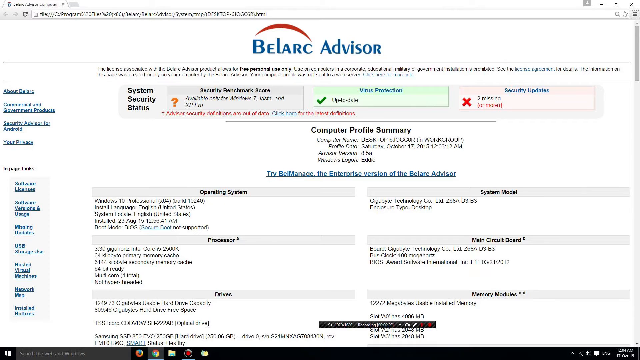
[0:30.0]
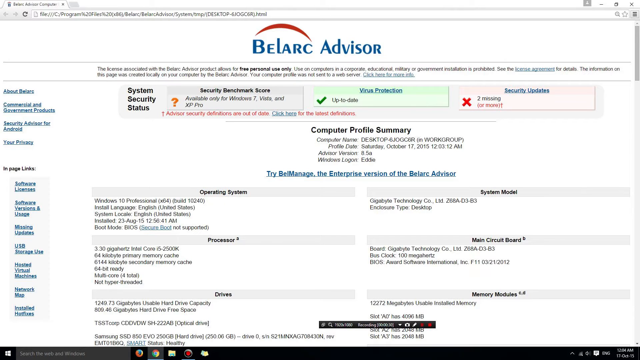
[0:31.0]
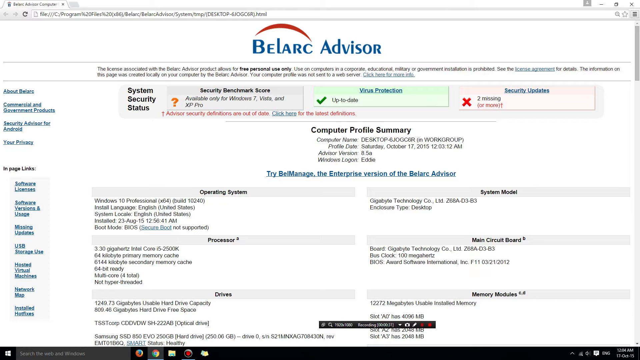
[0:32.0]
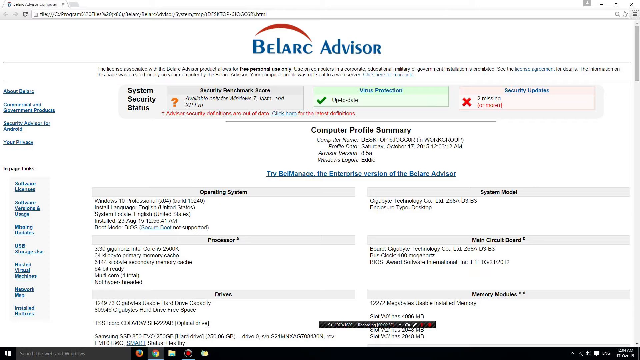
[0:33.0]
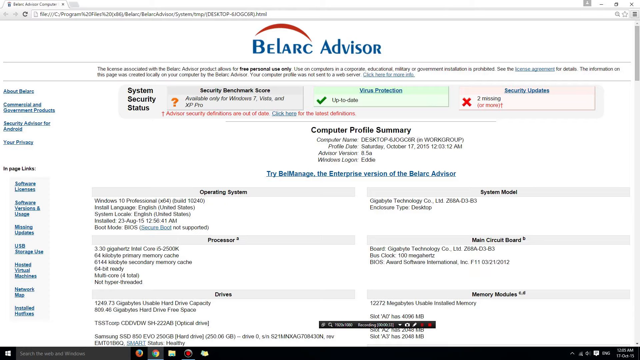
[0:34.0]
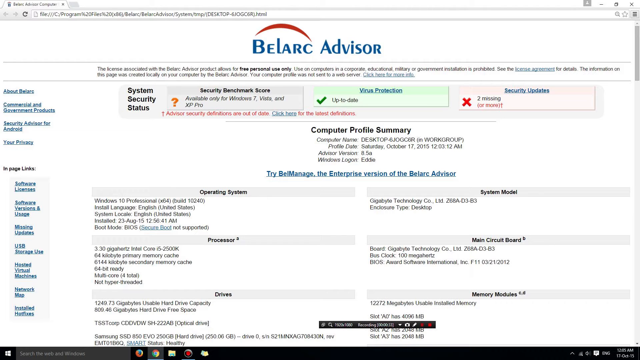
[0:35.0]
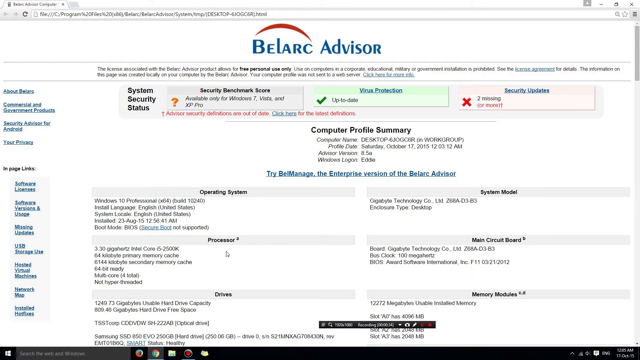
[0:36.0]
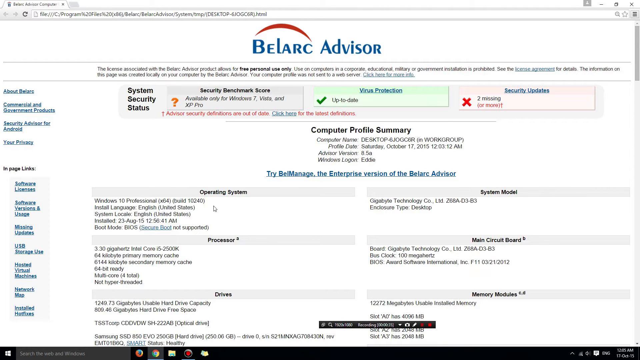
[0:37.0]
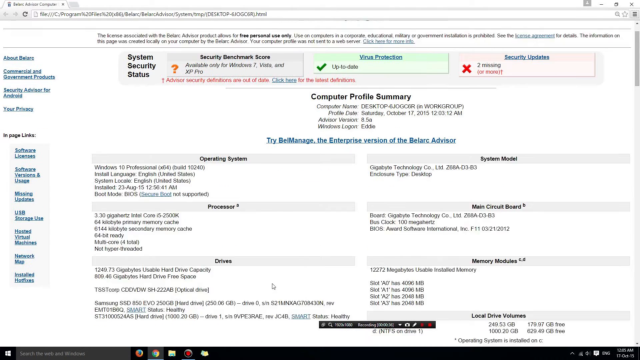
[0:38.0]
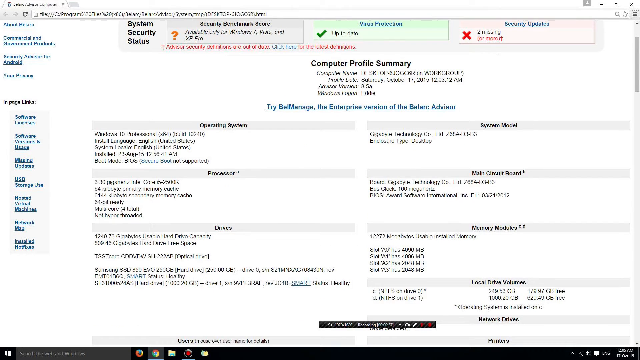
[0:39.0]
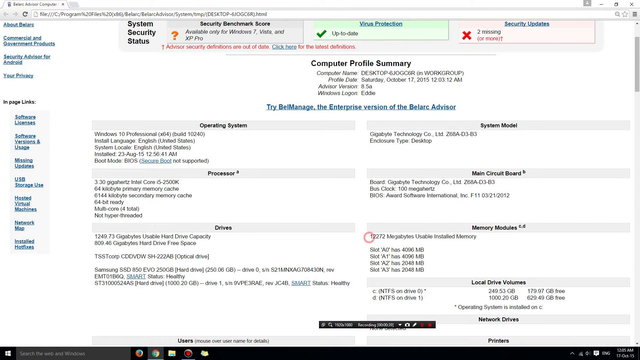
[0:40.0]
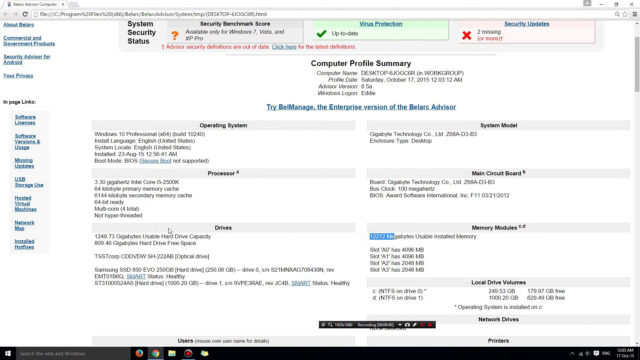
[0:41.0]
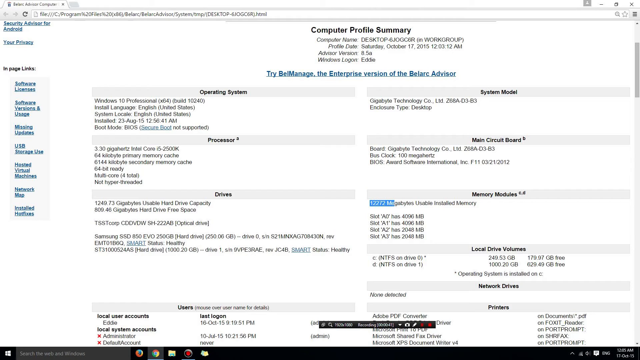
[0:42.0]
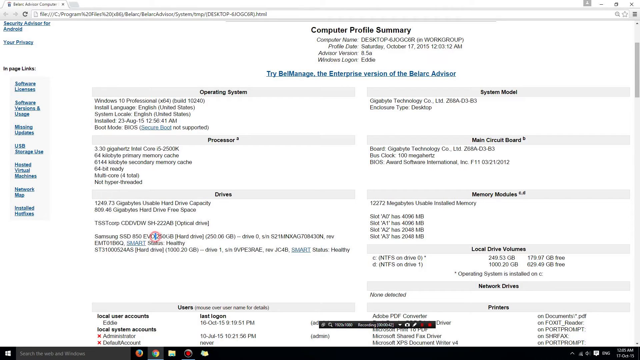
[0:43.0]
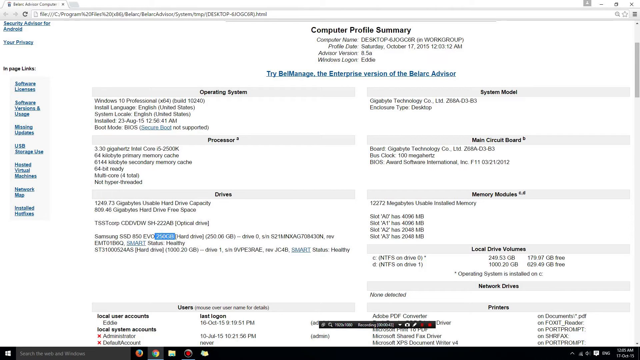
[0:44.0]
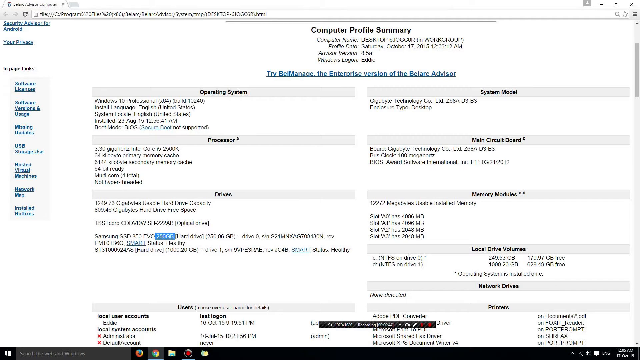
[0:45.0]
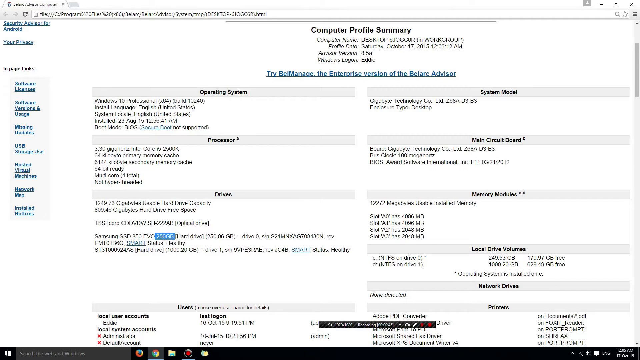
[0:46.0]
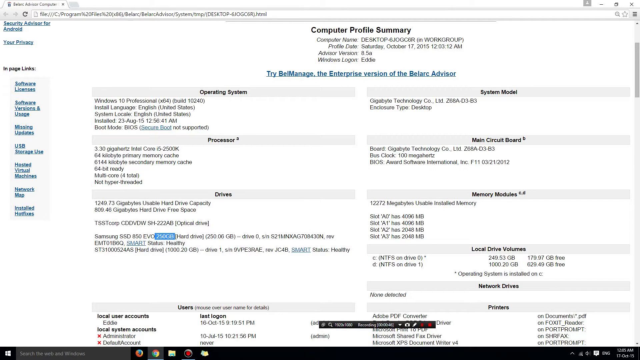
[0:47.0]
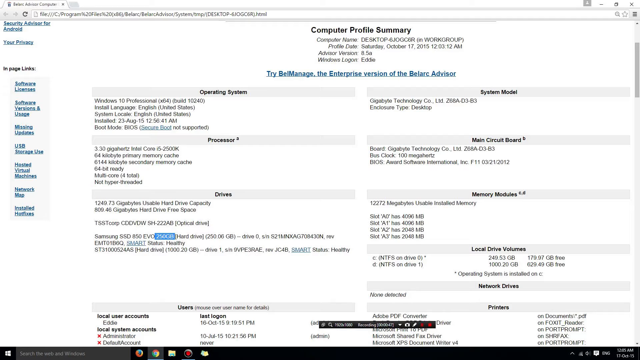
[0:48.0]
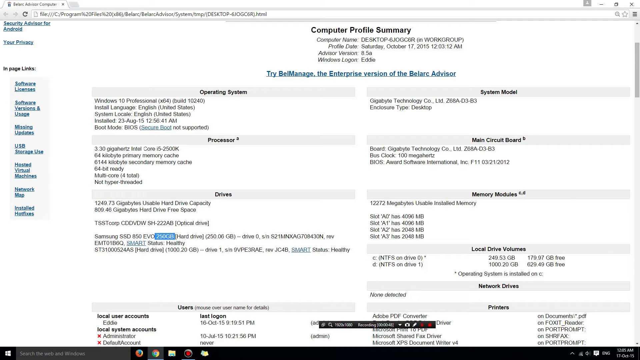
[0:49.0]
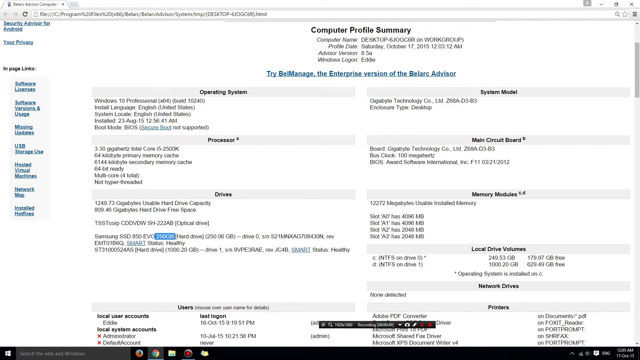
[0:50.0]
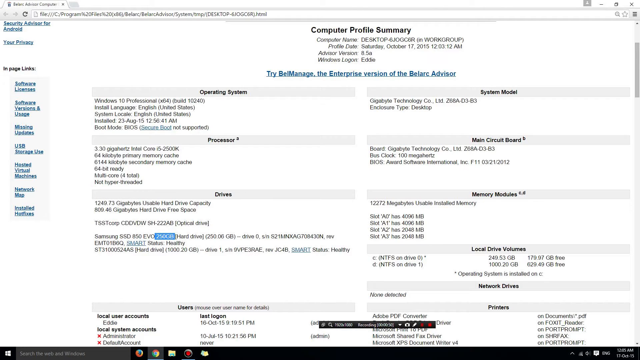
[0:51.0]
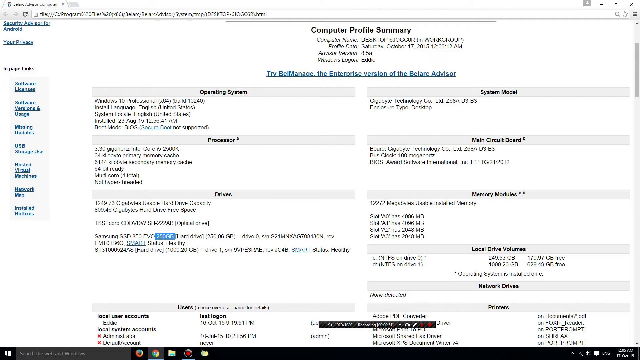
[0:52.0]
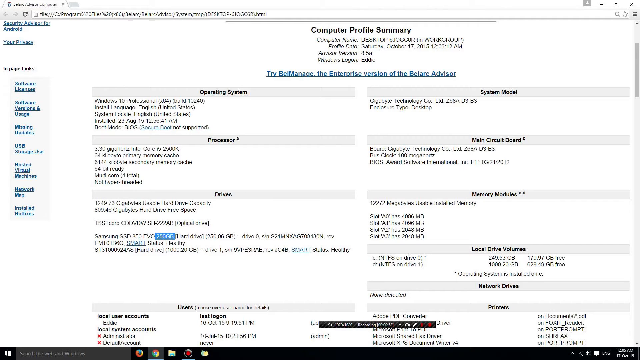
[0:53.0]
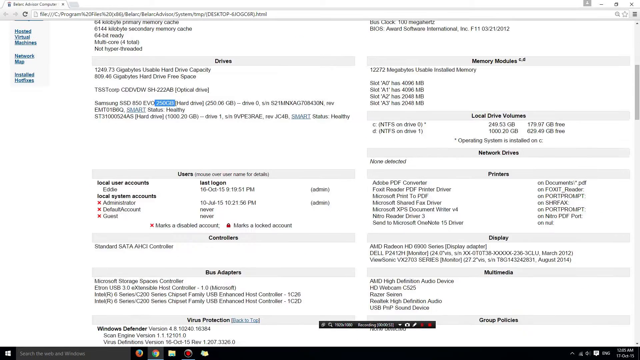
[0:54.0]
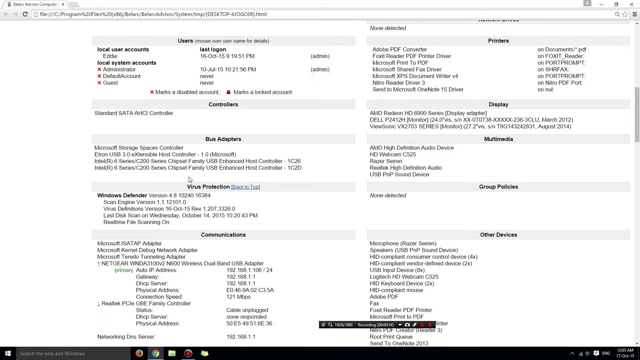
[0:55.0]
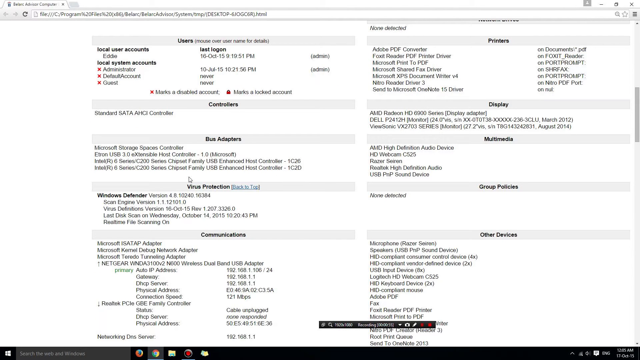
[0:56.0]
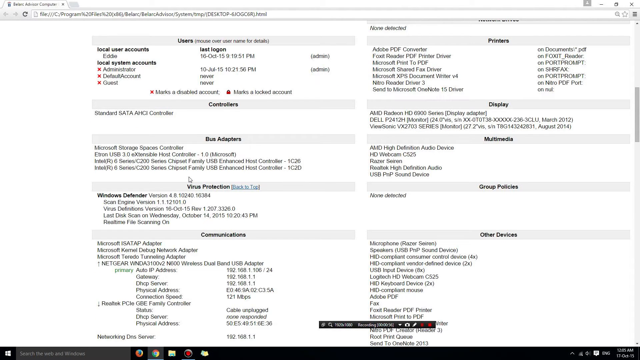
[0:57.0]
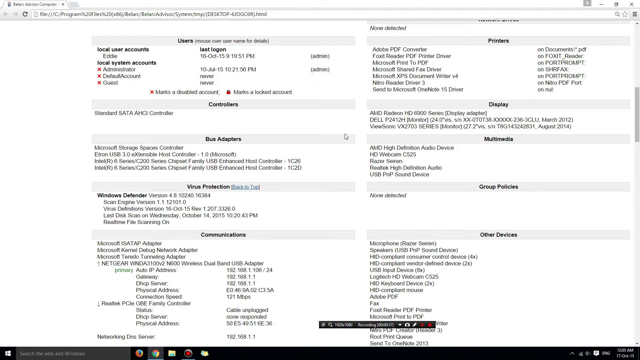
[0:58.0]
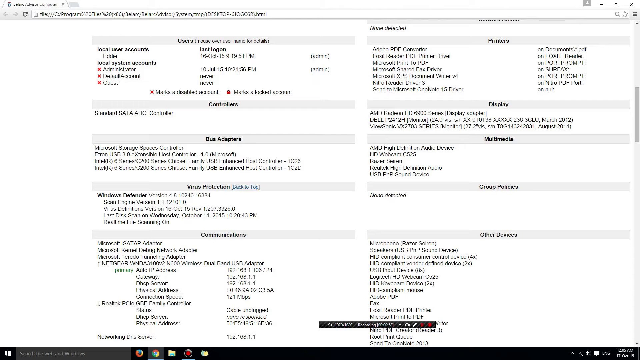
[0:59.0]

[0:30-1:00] The user scrolls down the website and highlights the memory module and drive information, including 250 gigabytes on the Samsung SSD 850 EVO hard drive line, seemingly to indicate that this is an important piece of information. The highlight is blue. Scrolling further reveals sections for users, printers, controllers, display, bus adapters, multimedia, virus protection, group policies, communications and other devices, with a lot of information about what is connected to the computer, the technology within the computer and the software on it. Using the mouse cursor, the person highlights the AMD Radeon display connected to the computer, creating a blue text highlight. By this point the blue links on the left-hand side of the screen have disappeared, leaving a white background with no text there.